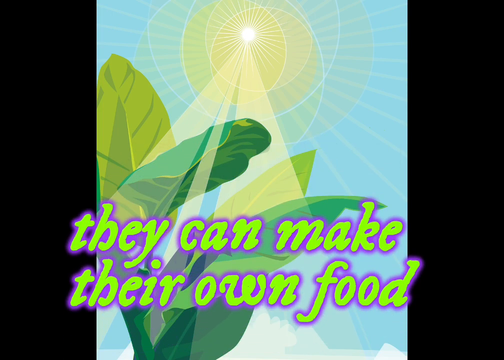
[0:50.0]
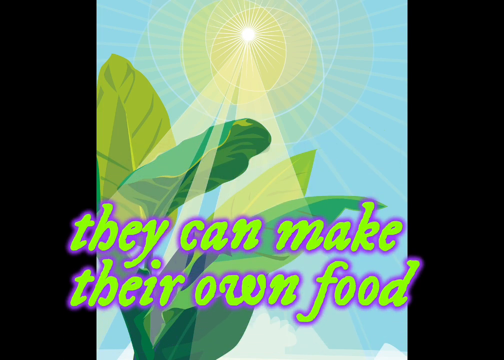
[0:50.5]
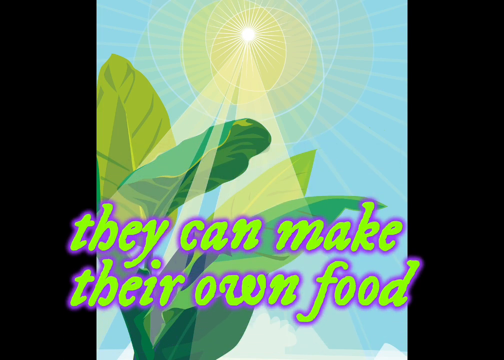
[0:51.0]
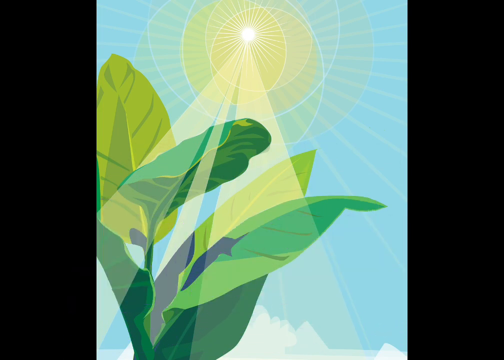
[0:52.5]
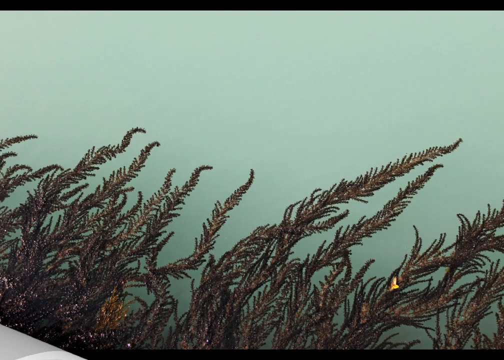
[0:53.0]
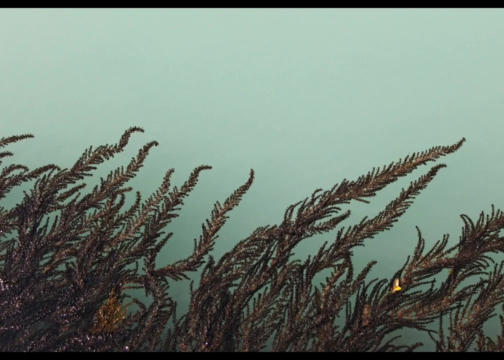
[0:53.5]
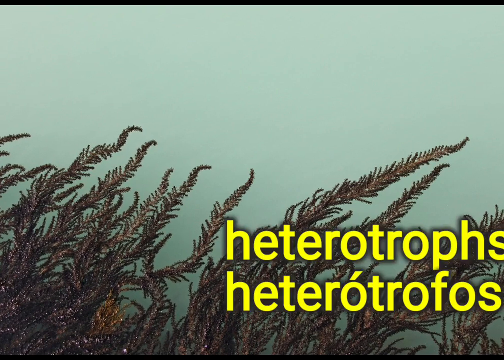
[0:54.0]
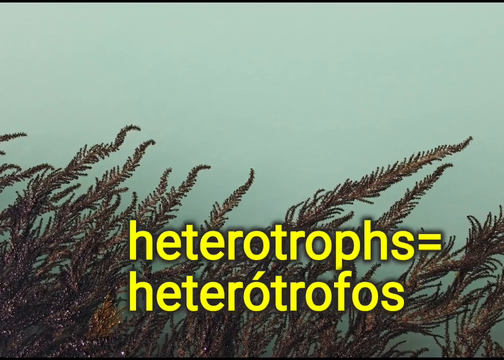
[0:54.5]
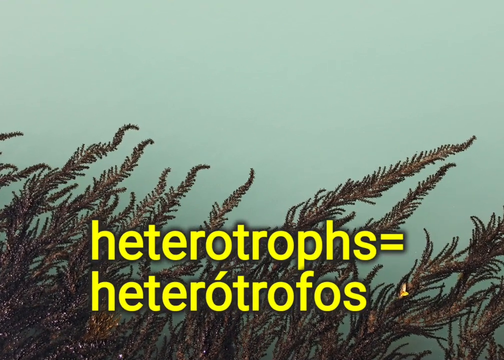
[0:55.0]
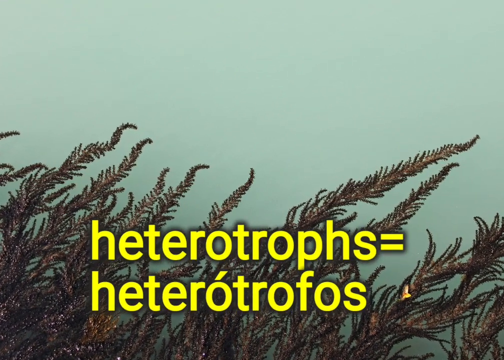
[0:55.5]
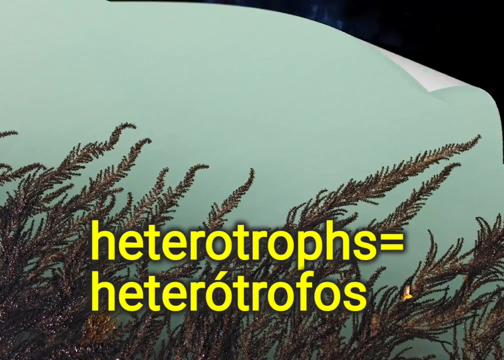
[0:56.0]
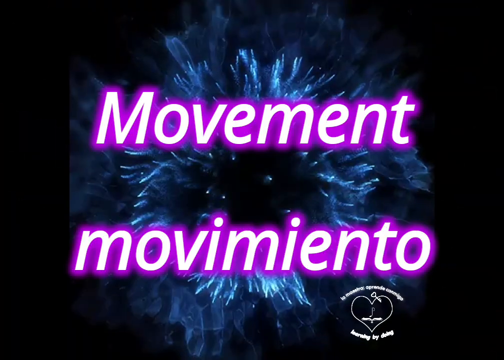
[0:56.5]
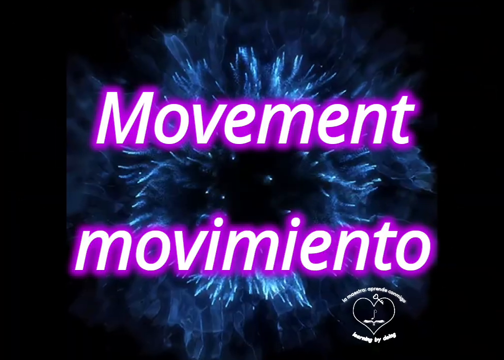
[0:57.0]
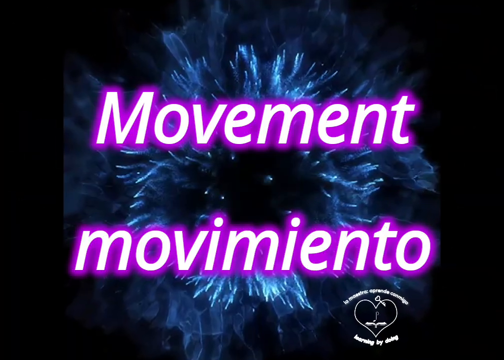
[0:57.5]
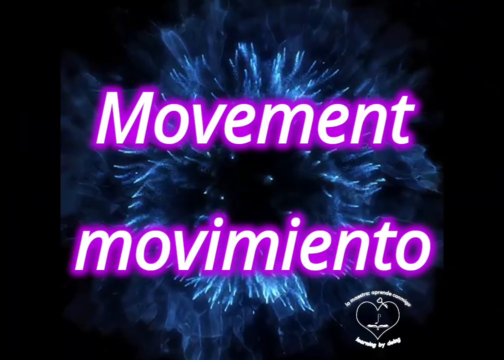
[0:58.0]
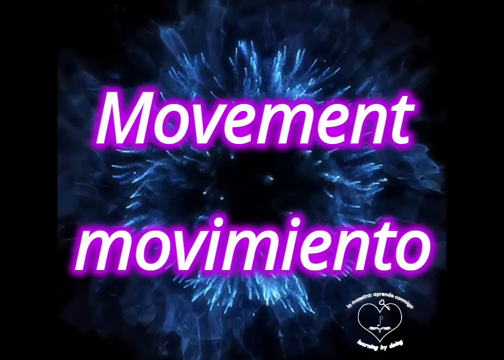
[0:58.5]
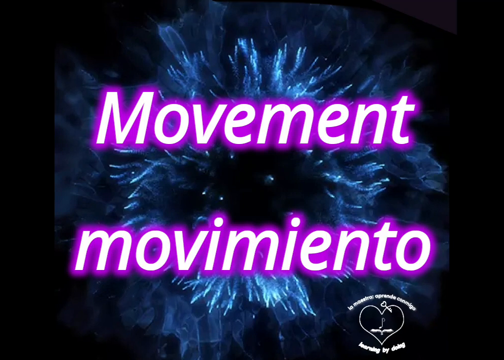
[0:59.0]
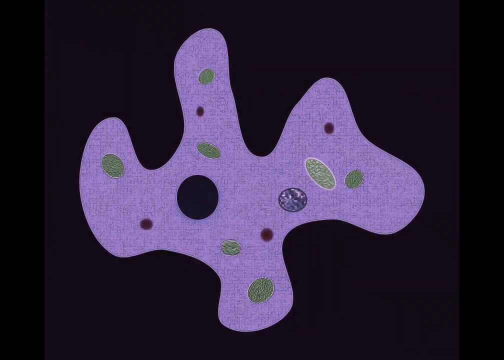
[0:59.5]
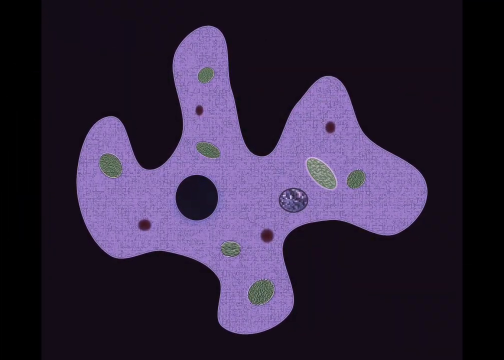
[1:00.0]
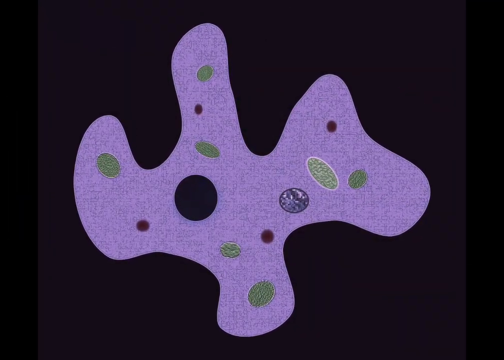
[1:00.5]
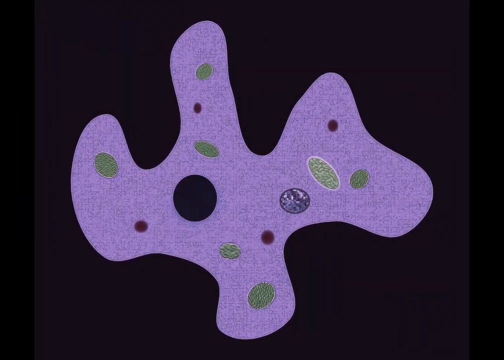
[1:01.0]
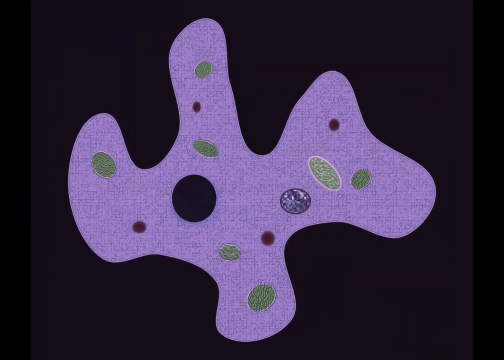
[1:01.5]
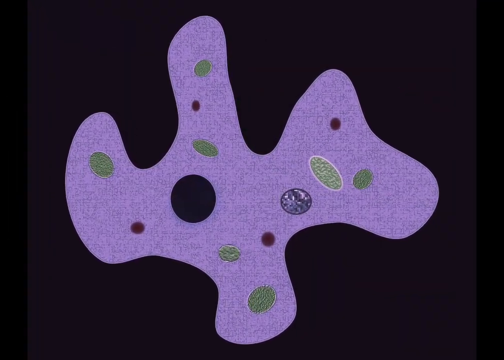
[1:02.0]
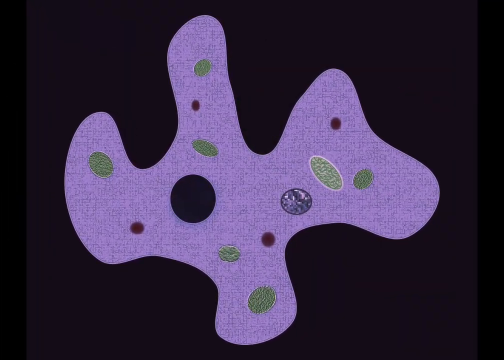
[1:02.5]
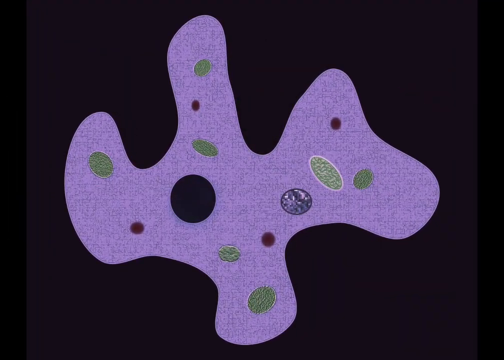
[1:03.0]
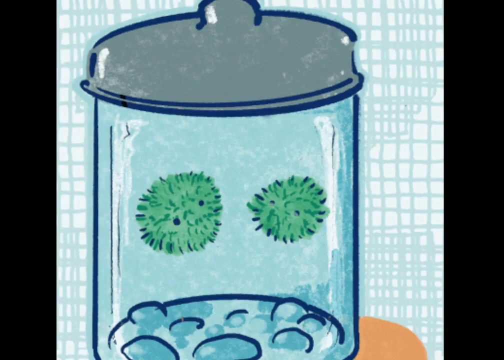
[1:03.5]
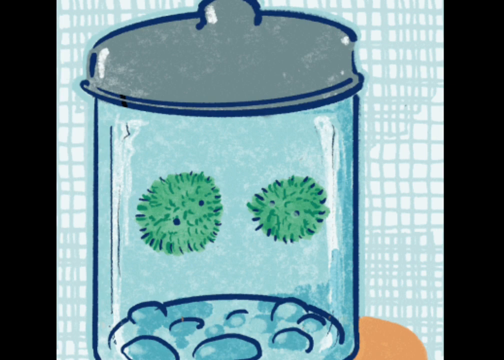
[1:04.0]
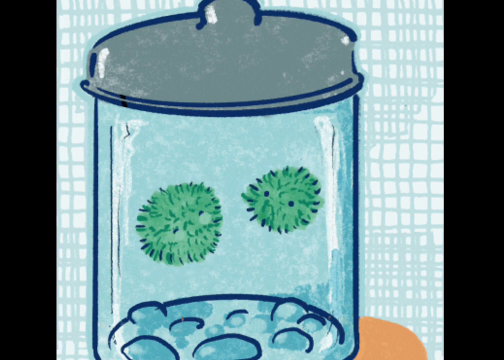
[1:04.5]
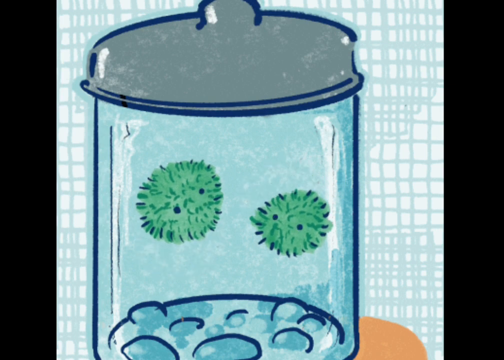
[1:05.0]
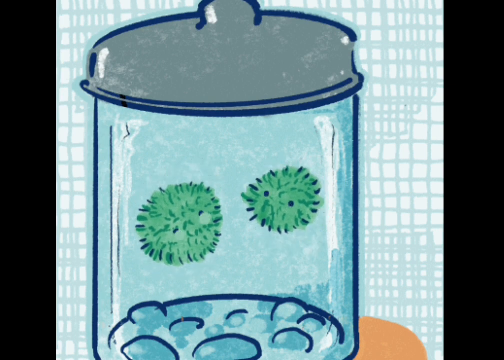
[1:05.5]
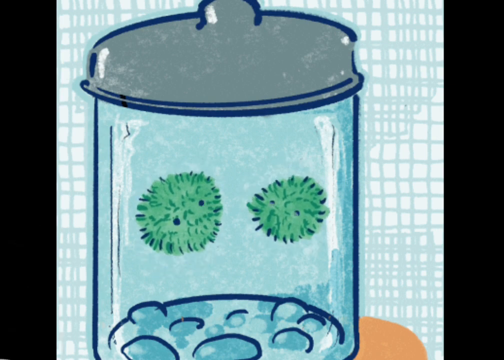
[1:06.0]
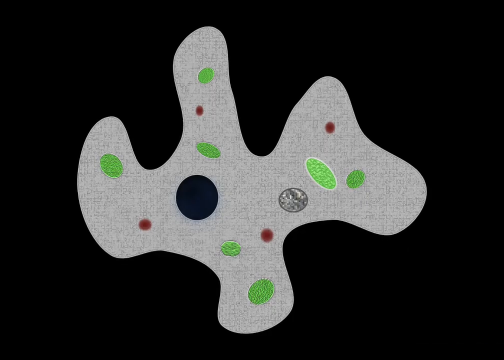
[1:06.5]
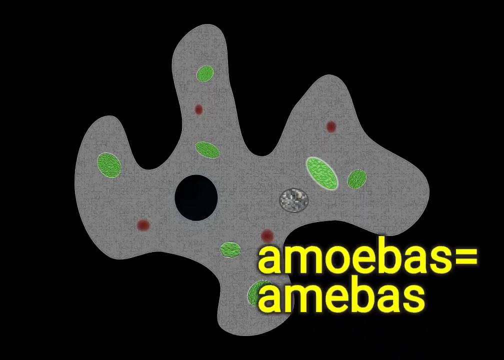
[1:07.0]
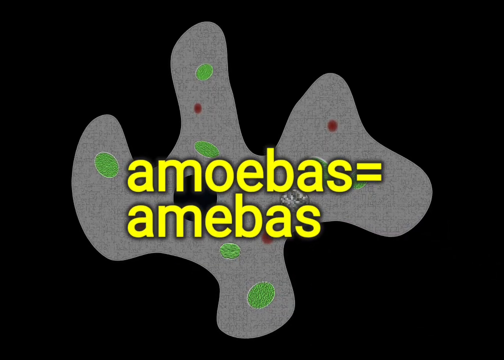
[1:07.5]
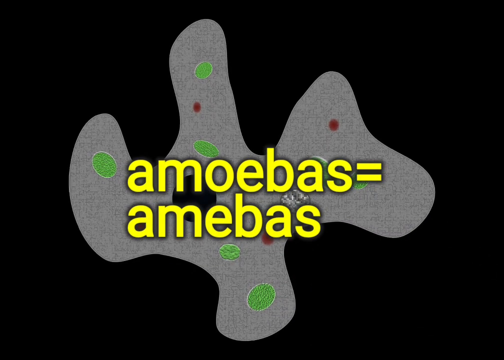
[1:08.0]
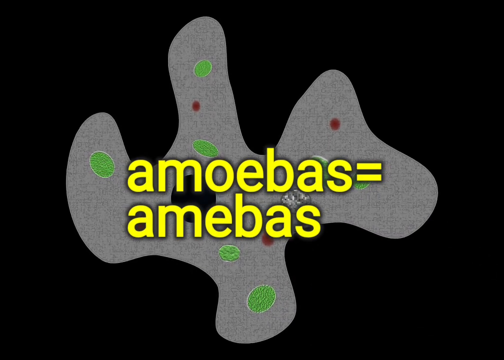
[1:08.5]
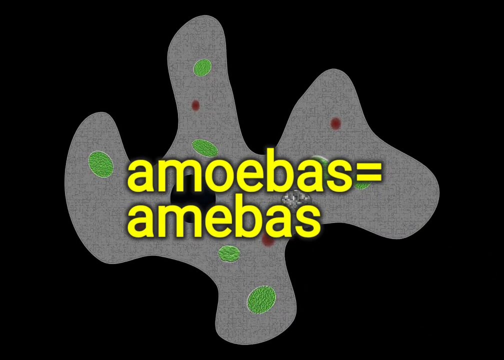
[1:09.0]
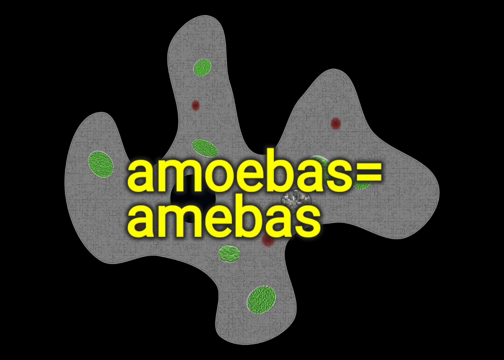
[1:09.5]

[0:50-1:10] The video covers how the organisms make their own food through photosynthesis, then heterotrophs, how they move, their shape, what is inside them, and how they gravitate toward each other, with a focus on amoebas. The graphics go by fast and illustrate the topics; they are colorful and illustrative, and the text passes too quickly to read. A middle graphic shows what is inside these microorganisms.